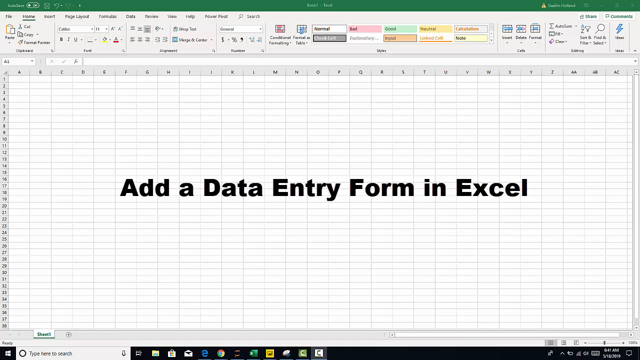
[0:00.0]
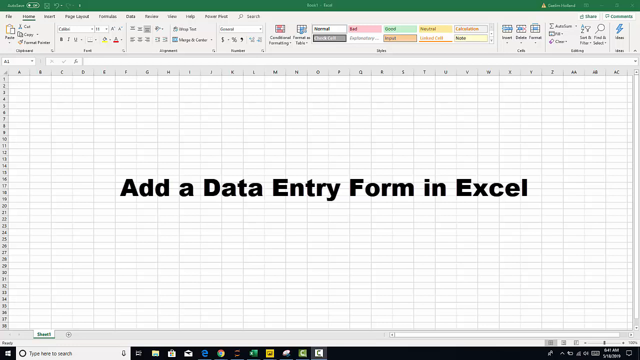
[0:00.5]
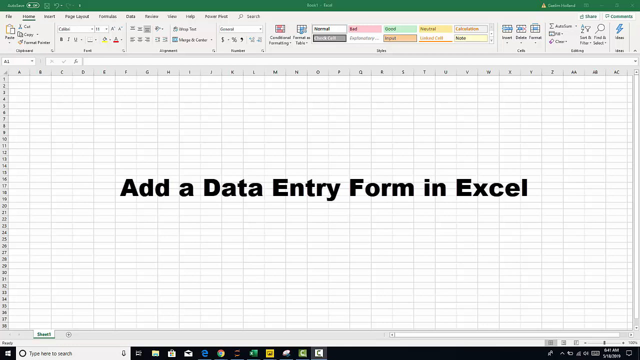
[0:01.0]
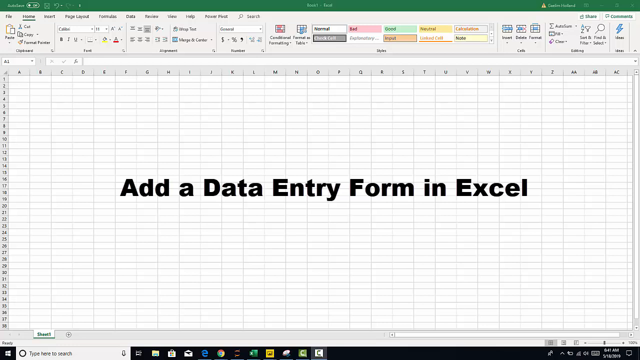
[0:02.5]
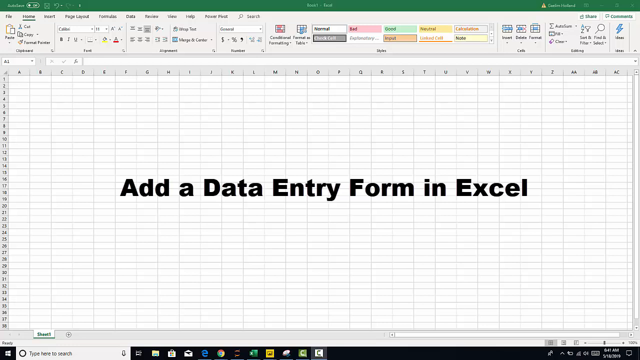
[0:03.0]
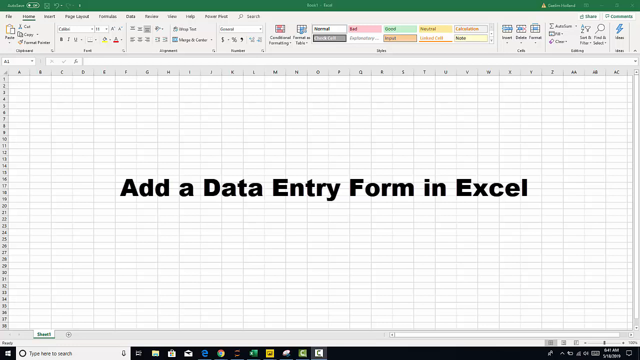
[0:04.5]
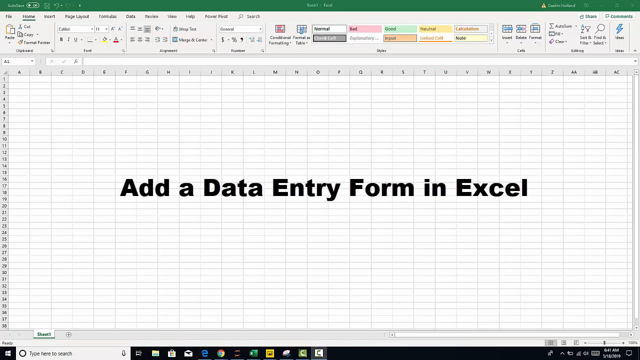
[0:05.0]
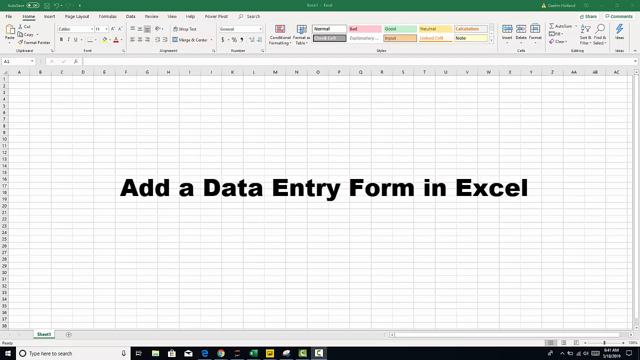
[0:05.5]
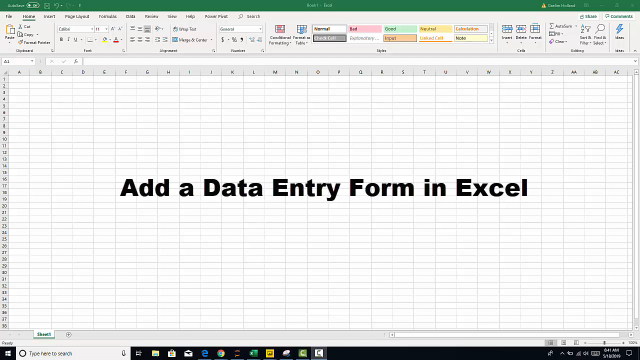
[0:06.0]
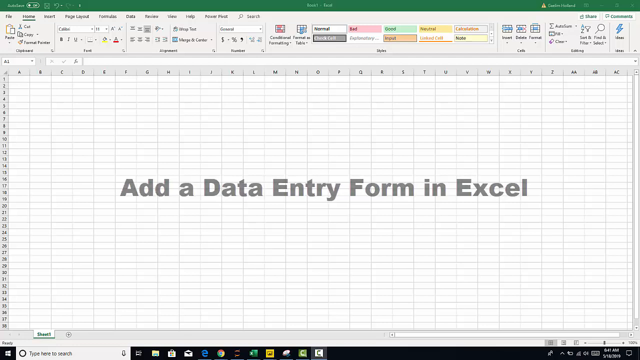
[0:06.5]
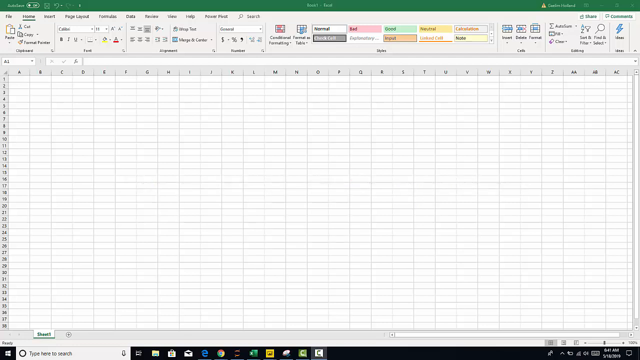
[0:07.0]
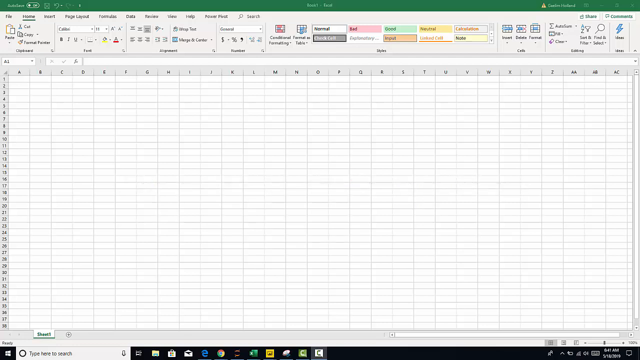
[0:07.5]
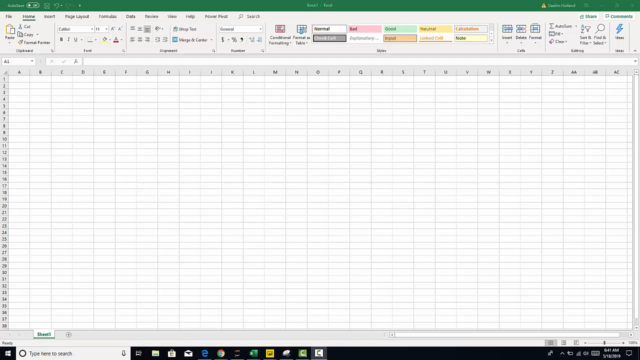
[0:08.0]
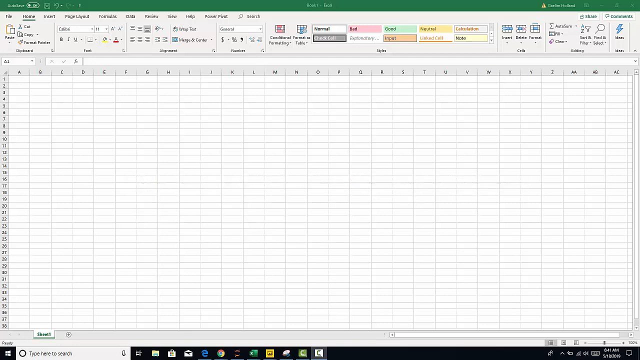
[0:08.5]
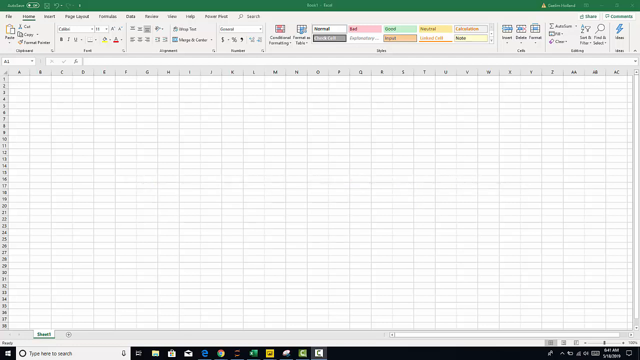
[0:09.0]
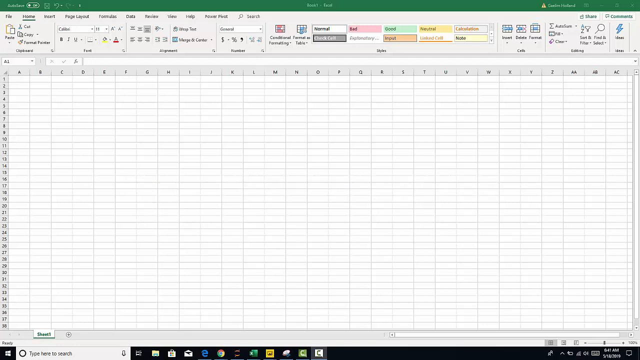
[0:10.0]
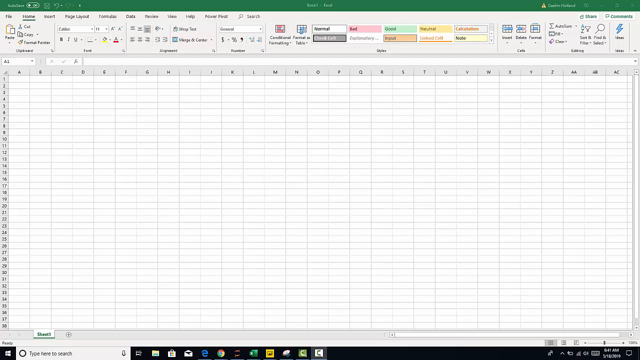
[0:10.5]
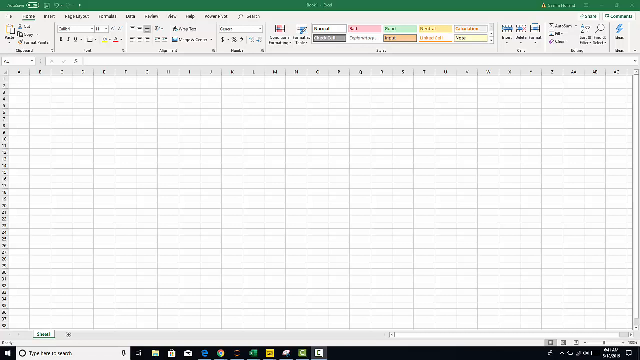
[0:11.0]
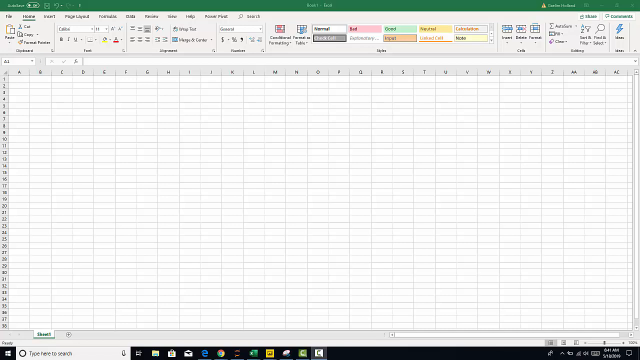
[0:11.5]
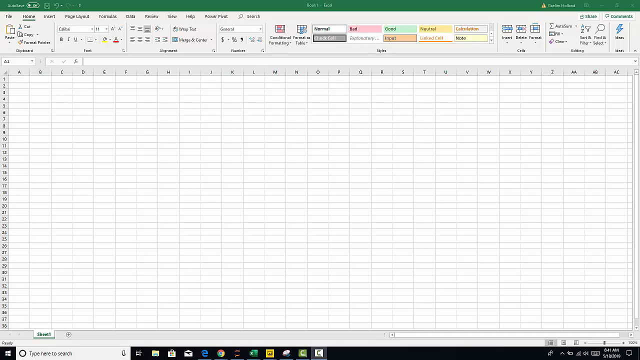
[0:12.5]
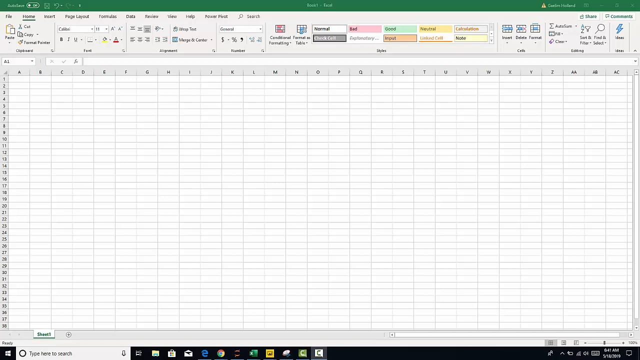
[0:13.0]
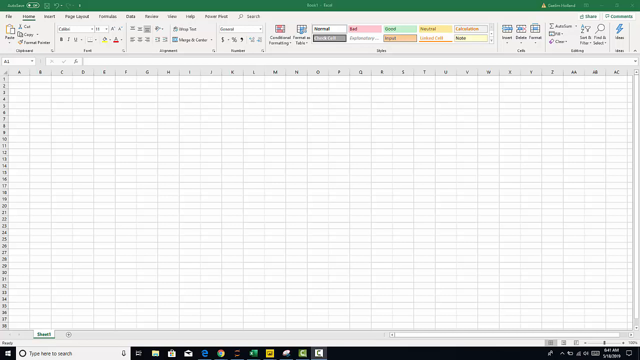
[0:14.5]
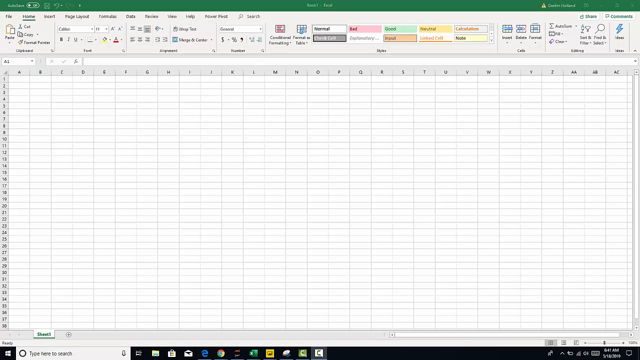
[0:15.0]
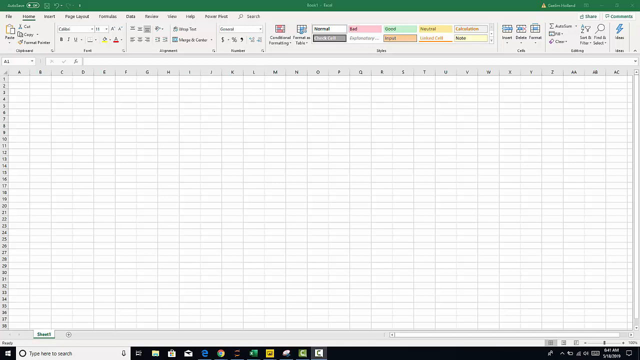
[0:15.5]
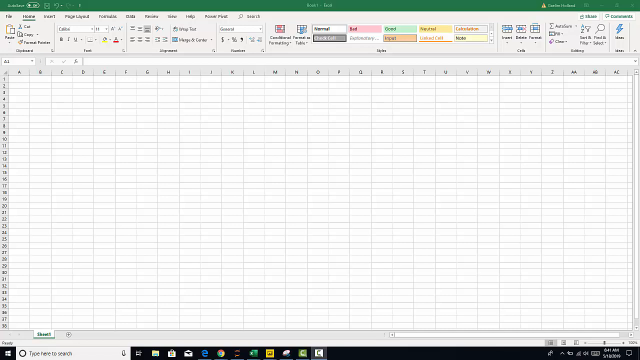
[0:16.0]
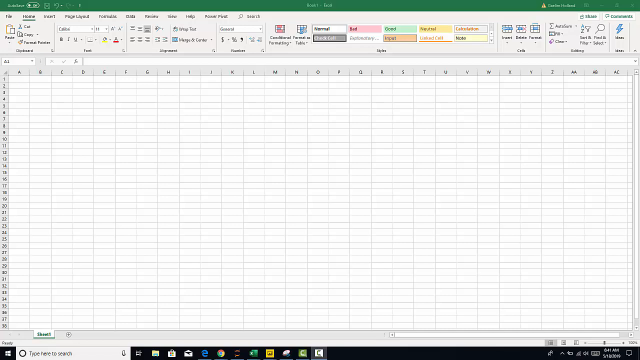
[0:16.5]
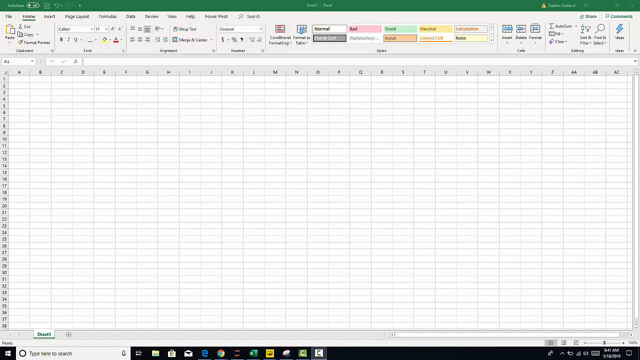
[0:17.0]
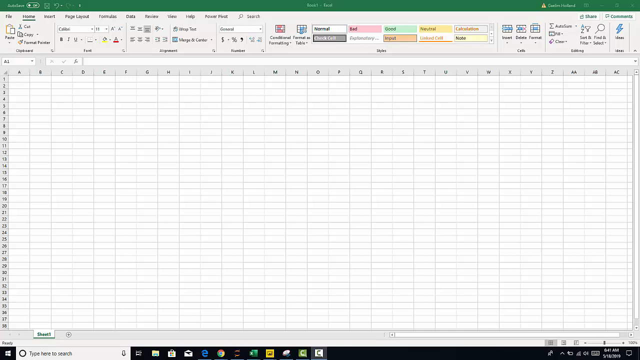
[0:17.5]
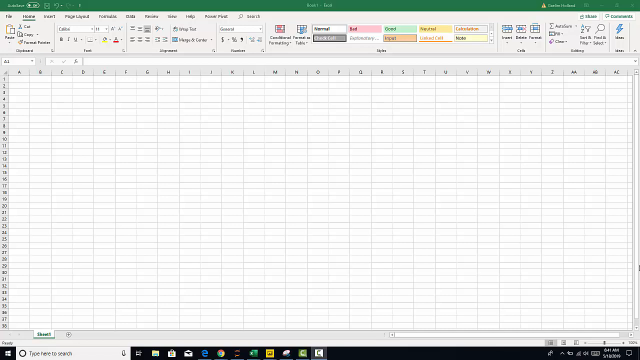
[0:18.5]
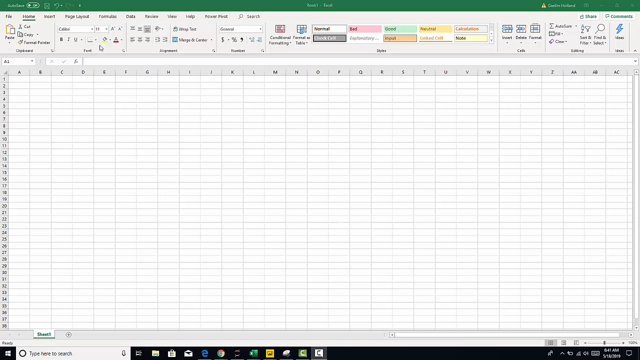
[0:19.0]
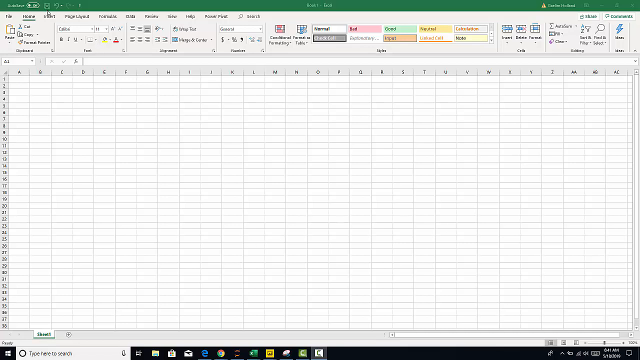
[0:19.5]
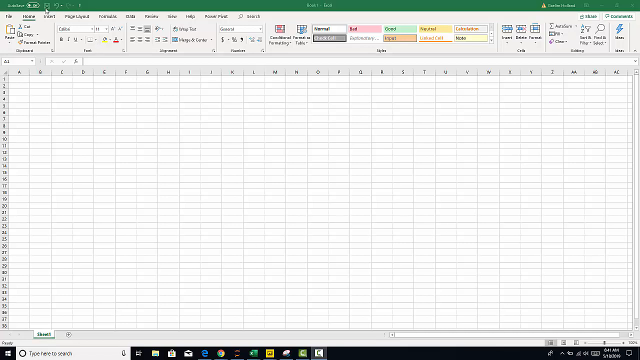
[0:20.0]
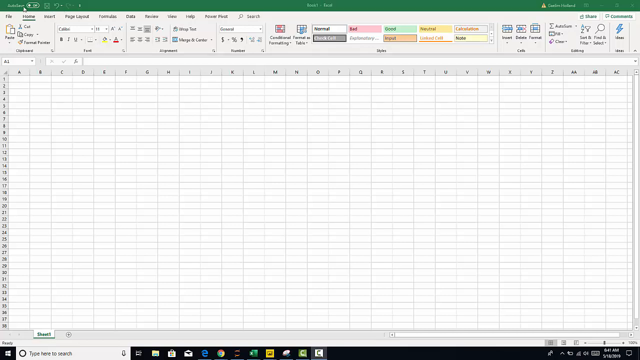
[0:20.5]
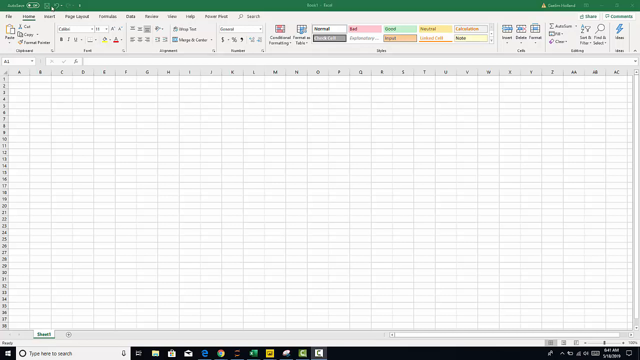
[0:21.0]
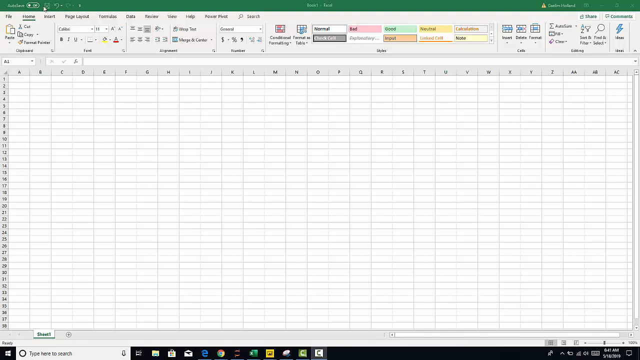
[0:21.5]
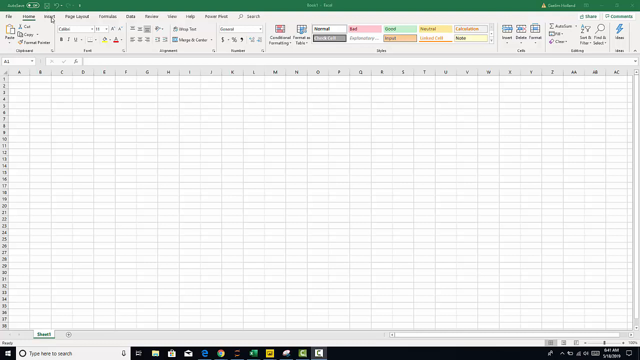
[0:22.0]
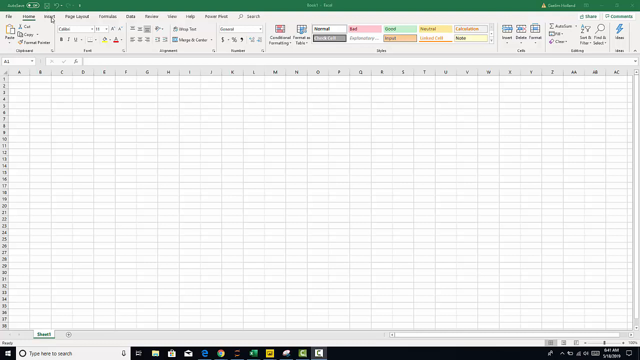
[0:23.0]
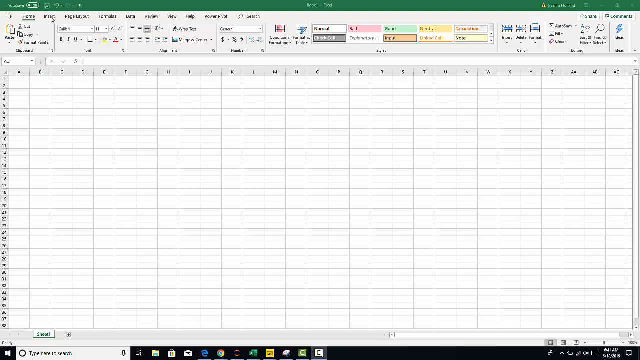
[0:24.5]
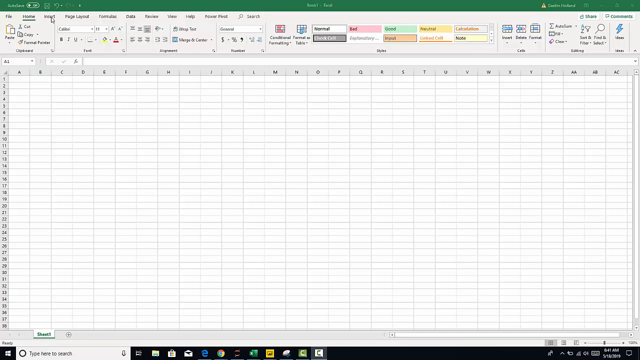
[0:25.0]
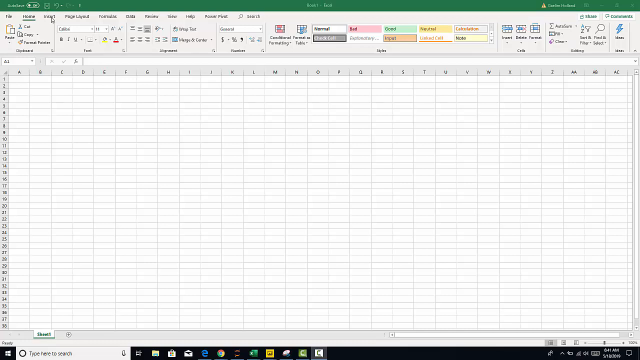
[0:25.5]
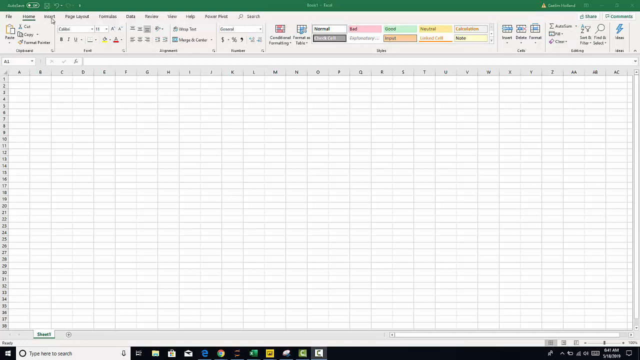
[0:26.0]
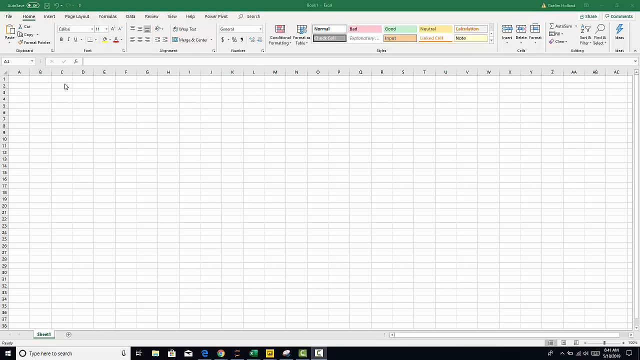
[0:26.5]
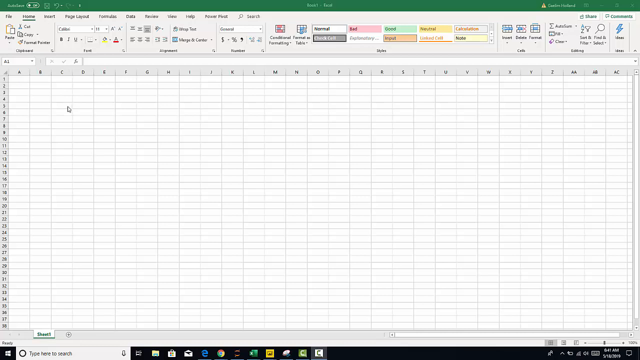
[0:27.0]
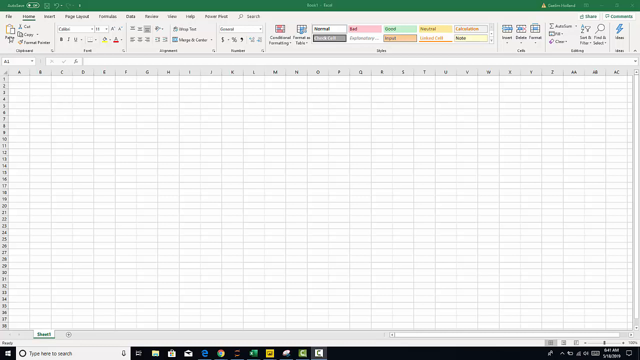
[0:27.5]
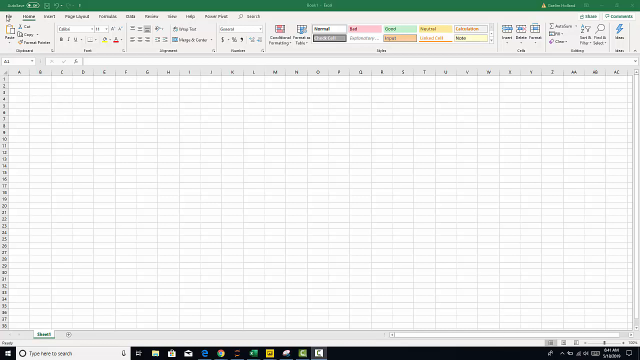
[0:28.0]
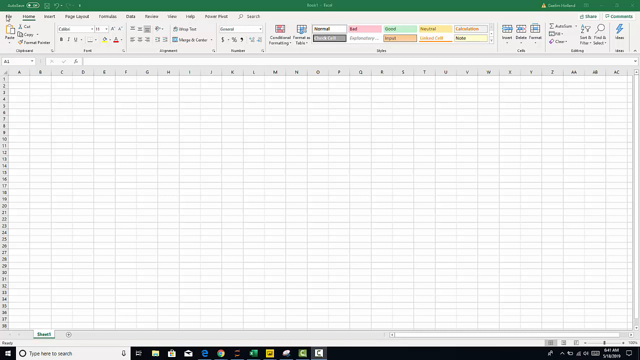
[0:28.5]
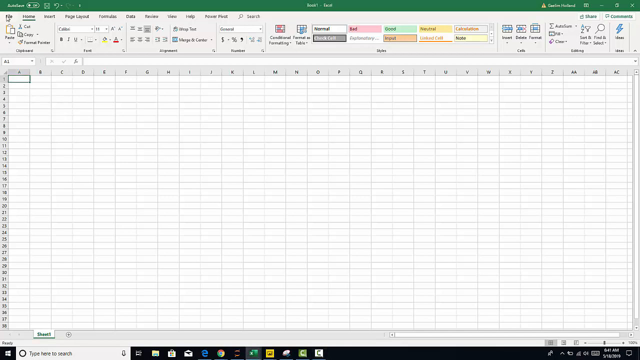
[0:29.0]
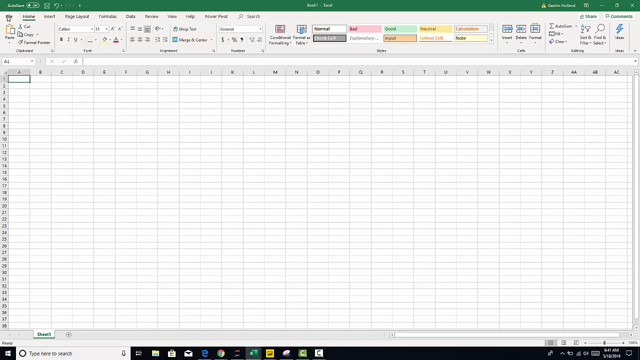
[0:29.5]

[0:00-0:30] Someone works in an Excel sheet. At the beginning, black bold text in the middle of the screen reads "add a data entry form in excel," apparently indicating that the video is a tutorial on that topic. The sheet is blank: columns A through AC and rows 1 through 28 are visible, all empty. A mouse cursor moves up to the top left, hovers over Insert, then hovers over File, and appears about to click it. Little else happens in this stretch, which is probably an introductory portion.